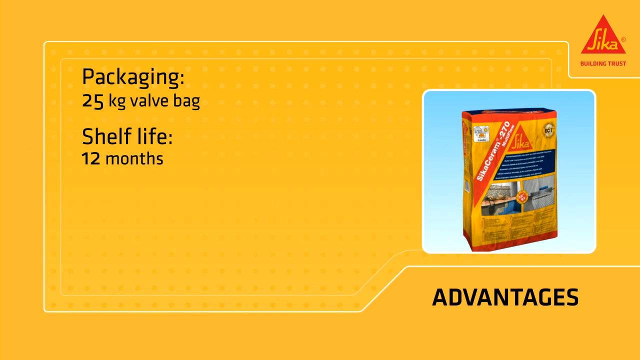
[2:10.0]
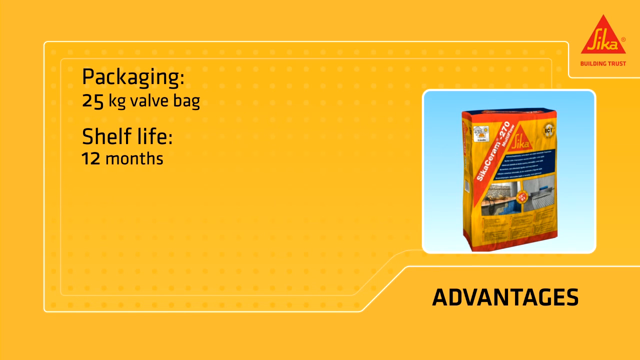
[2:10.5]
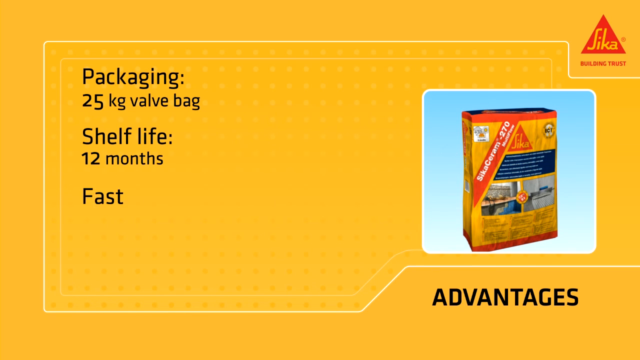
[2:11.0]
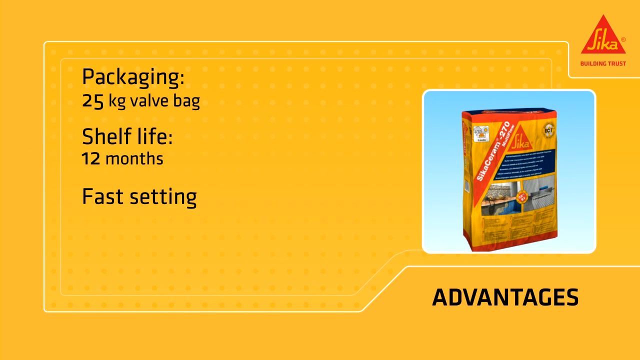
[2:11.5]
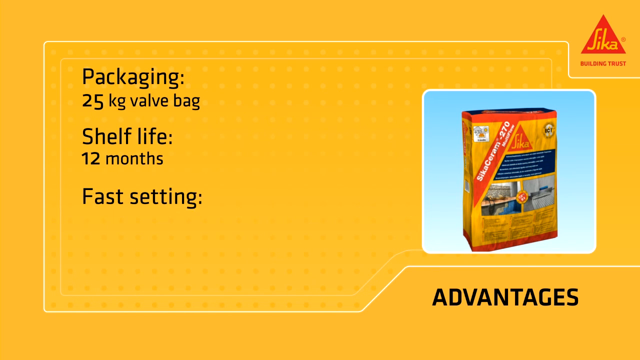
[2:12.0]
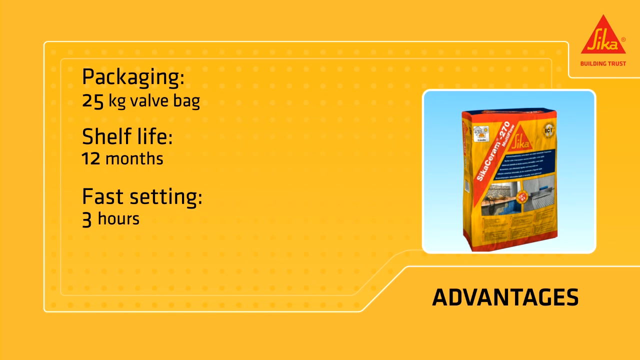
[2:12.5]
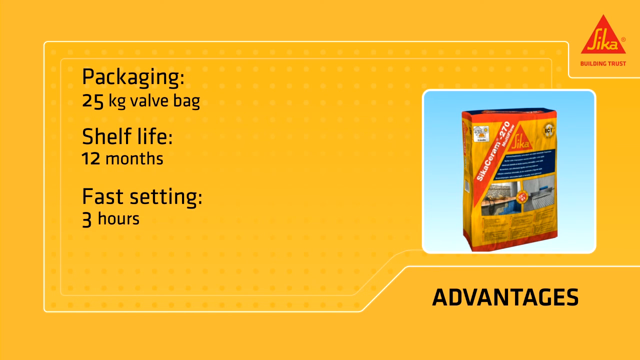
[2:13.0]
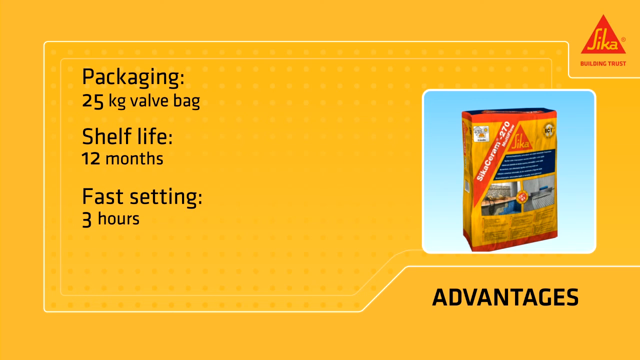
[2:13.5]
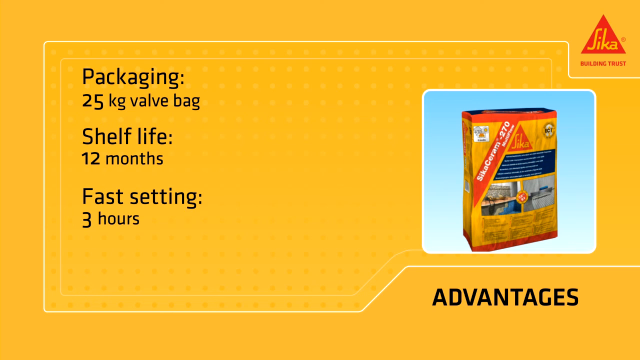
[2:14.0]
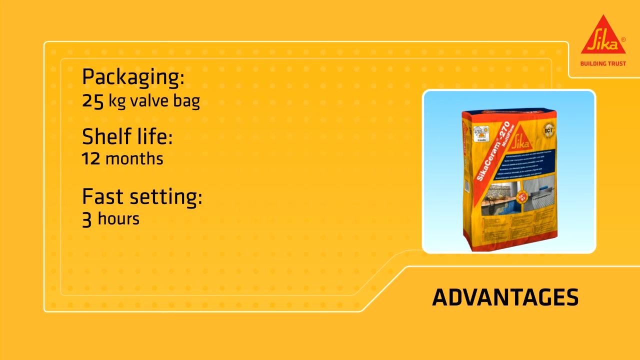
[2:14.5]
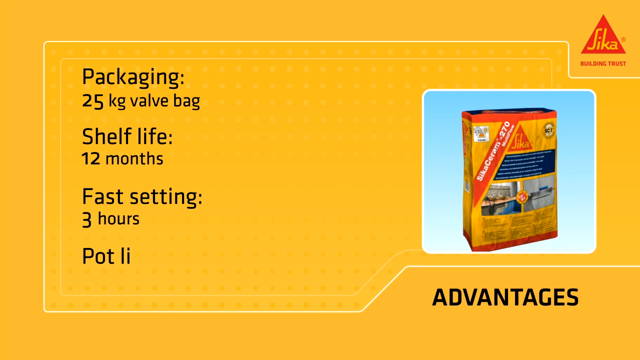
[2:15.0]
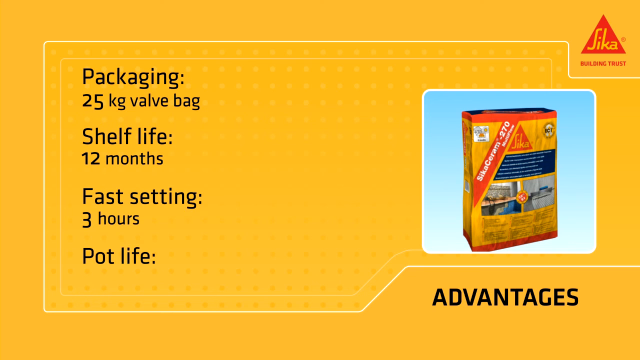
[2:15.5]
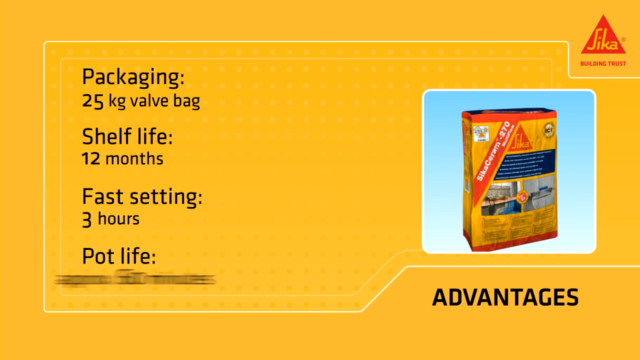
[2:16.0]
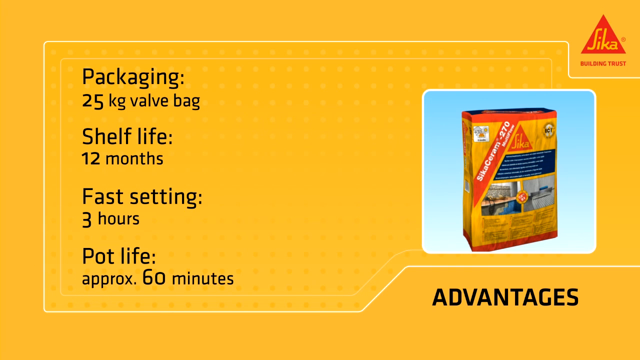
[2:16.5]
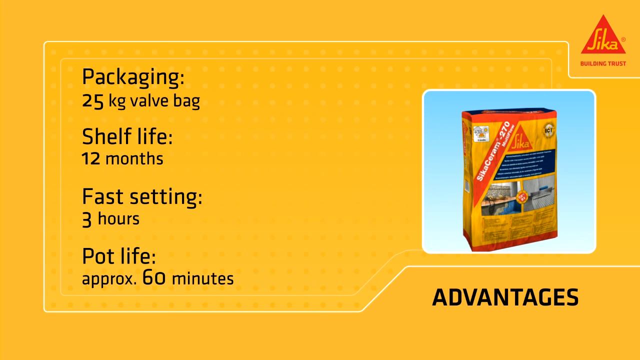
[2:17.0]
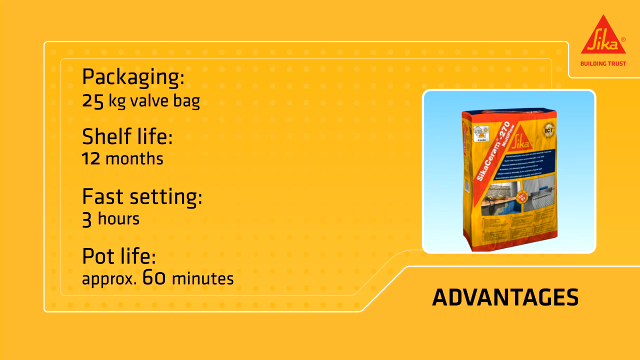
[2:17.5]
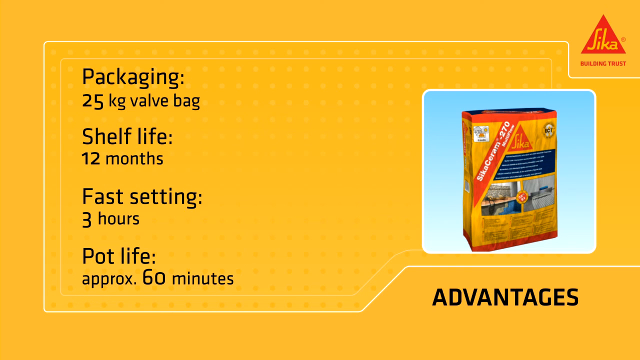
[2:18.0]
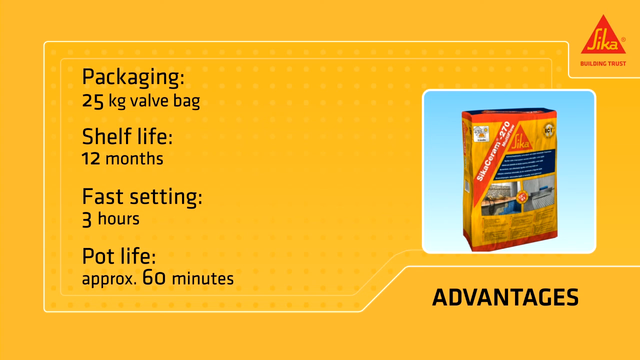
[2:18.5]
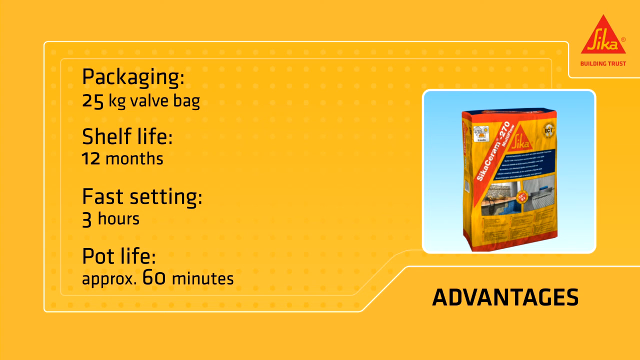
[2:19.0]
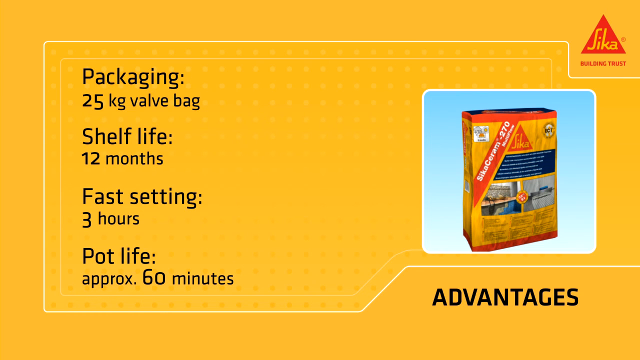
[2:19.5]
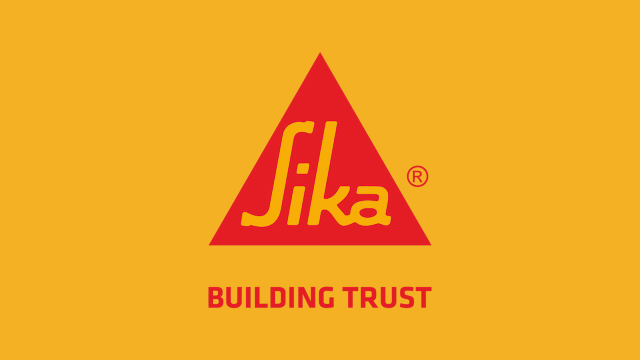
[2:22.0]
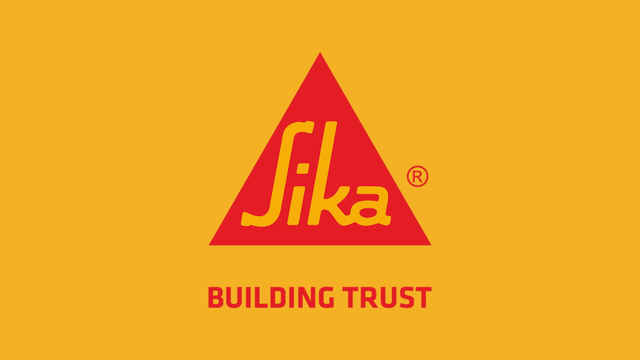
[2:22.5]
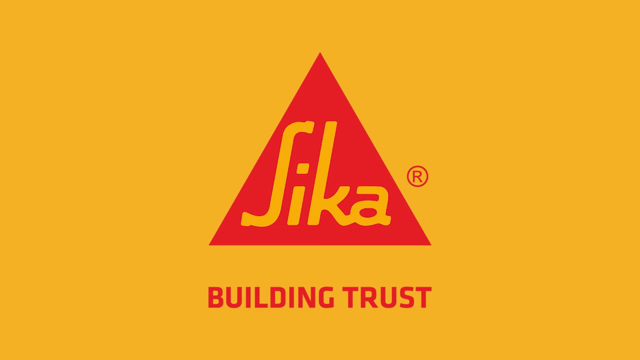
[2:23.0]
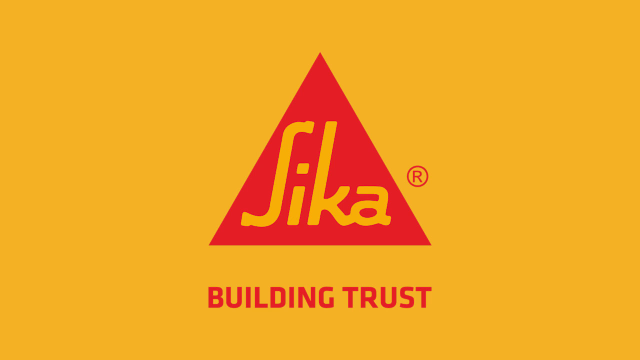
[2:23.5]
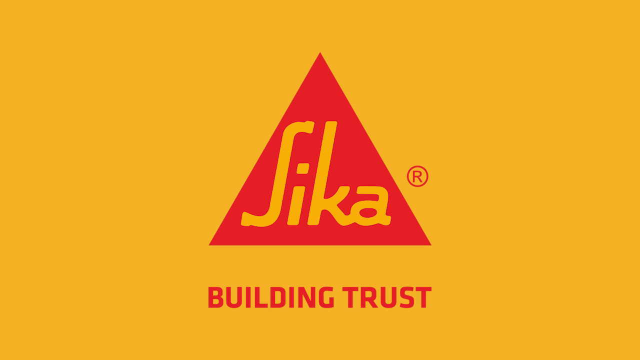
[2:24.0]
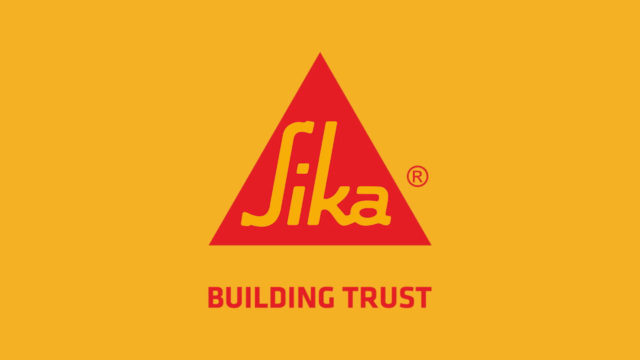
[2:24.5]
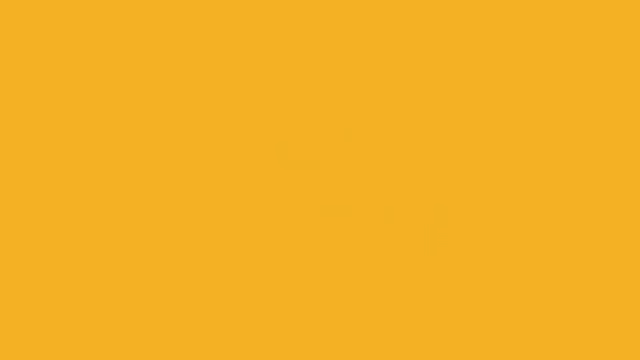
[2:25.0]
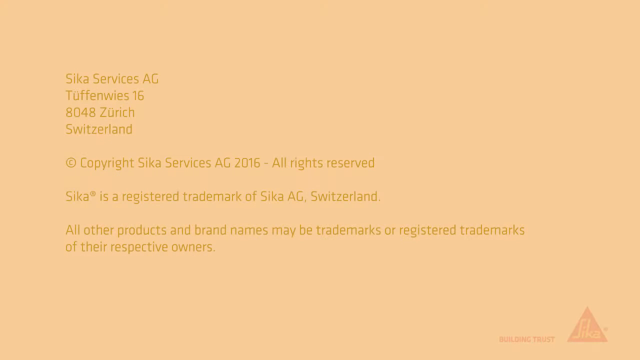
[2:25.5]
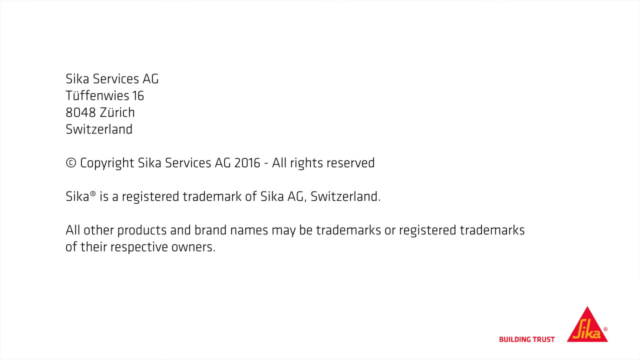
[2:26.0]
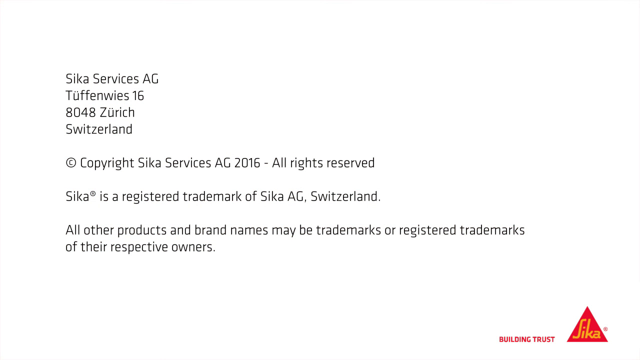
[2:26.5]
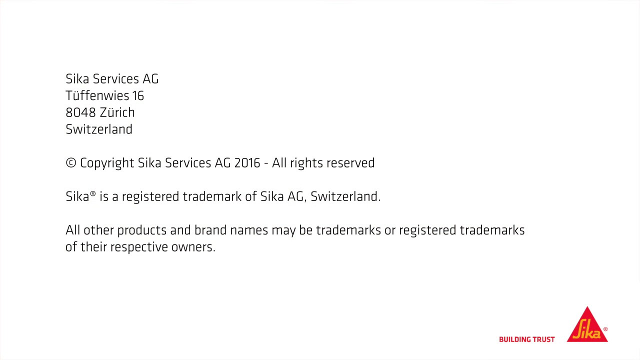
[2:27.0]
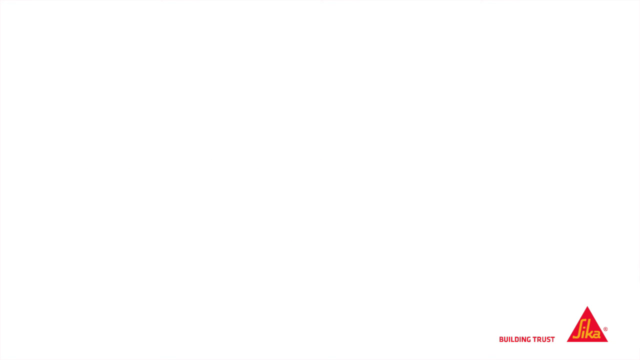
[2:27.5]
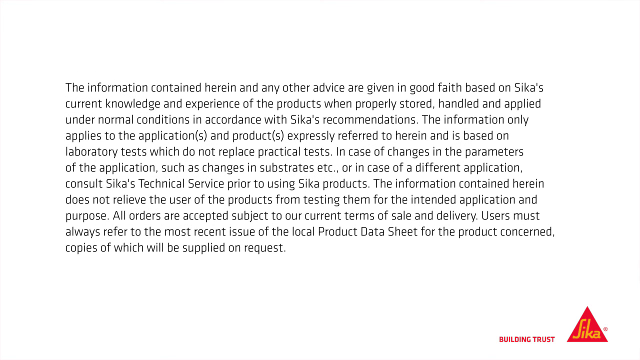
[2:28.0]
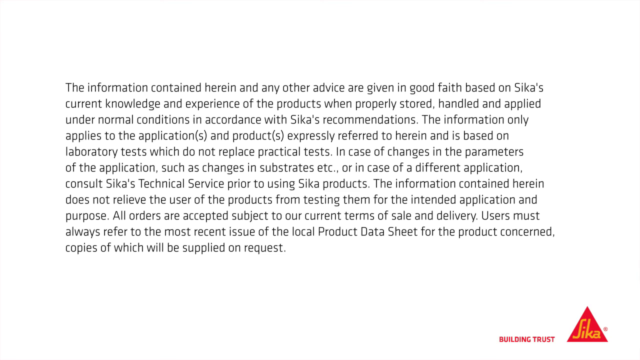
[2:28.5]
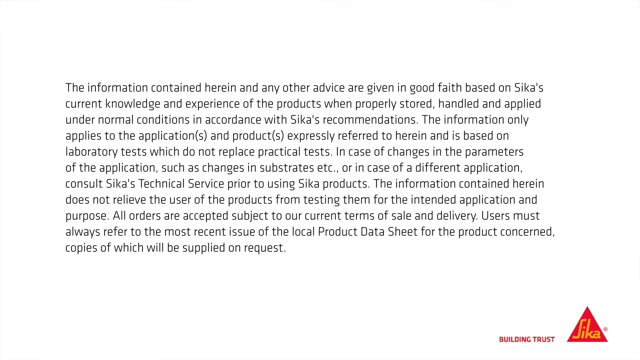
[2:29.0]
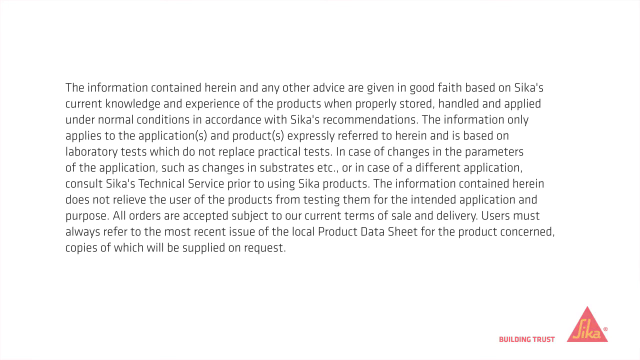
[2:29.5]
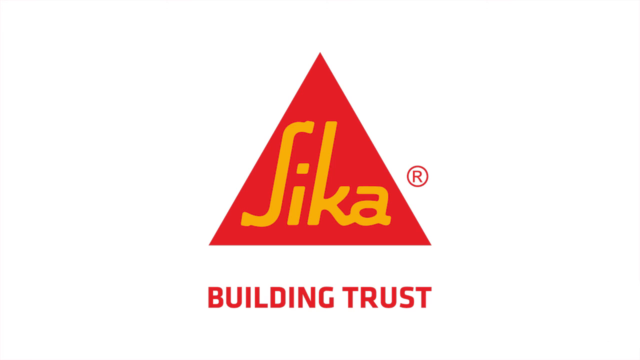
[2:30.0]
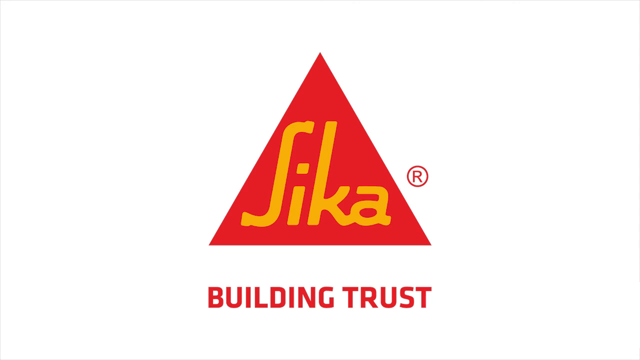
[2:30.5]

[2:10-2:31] On a yellow background, a photo of the yellow, black and red bag of SikaCeram 270 compound is on the right, and a list of advantages is on the left: "packaging, 25 kg valve bag," "shelf life, 12 months," "fast setting, 3 hours," and "pot life, approximately 60 minutes." These exit to the left and right, leaving the Sika logo: a red triangle with yellow lettering matching the background and a registered "R" in the upper right, with the motto "Building Trust" below. Then copyright-style information appears, reading "all rights reserved. Sika is a registered trademark of Sika AG, Switzerland. All other products and brand names may be trademarks or registered trademarks of their respective owners," with a Switzerland address at the top.